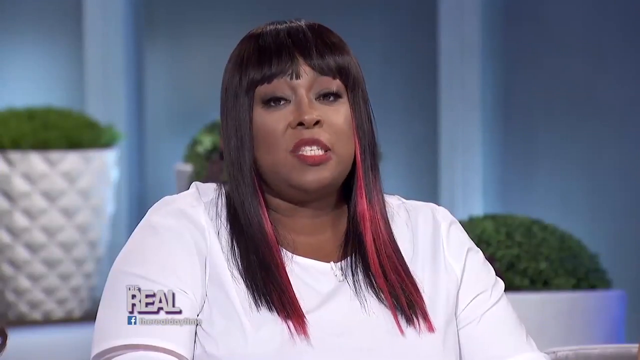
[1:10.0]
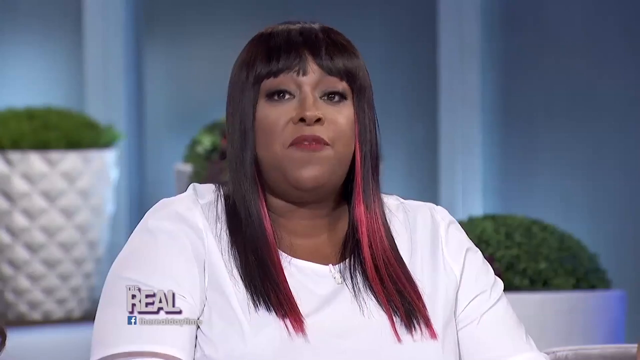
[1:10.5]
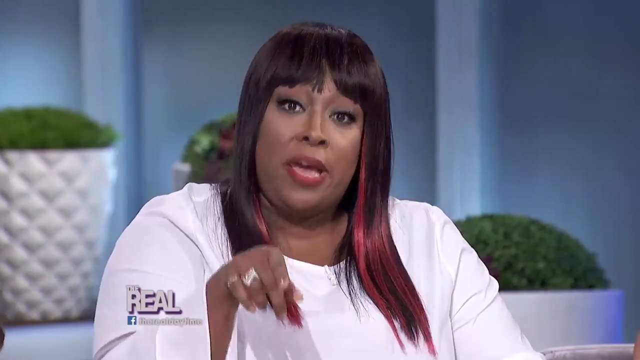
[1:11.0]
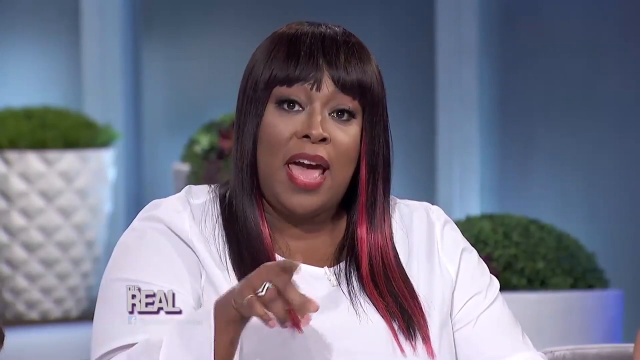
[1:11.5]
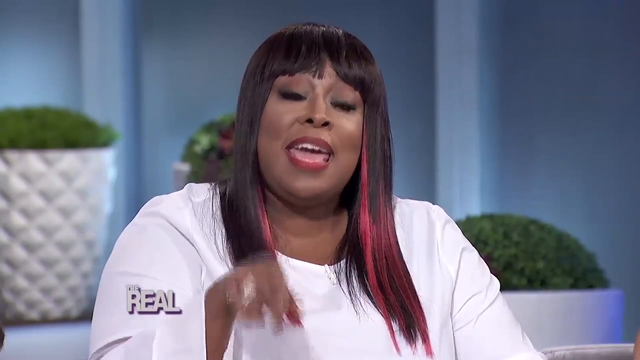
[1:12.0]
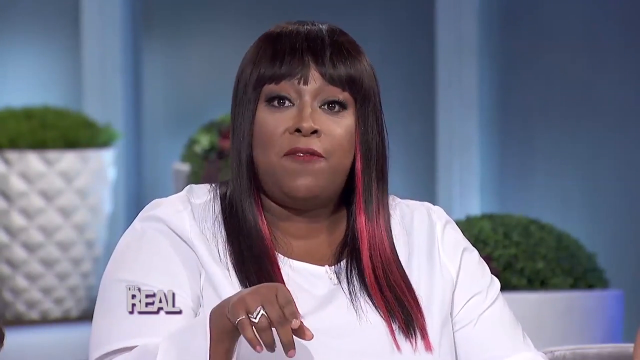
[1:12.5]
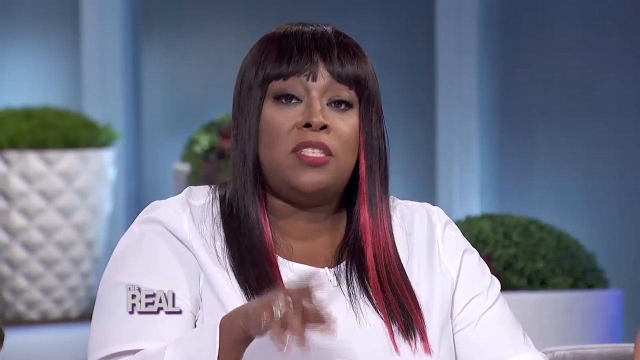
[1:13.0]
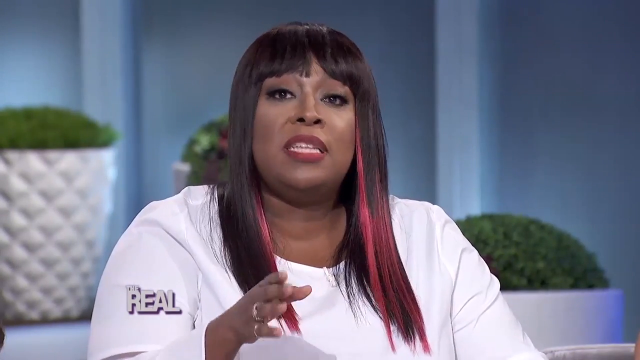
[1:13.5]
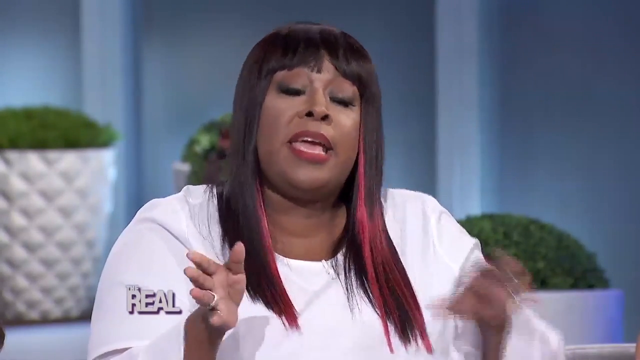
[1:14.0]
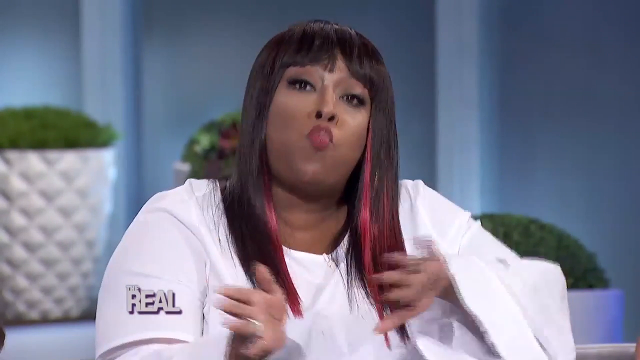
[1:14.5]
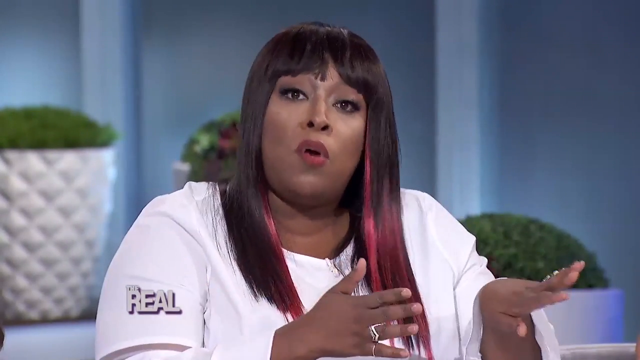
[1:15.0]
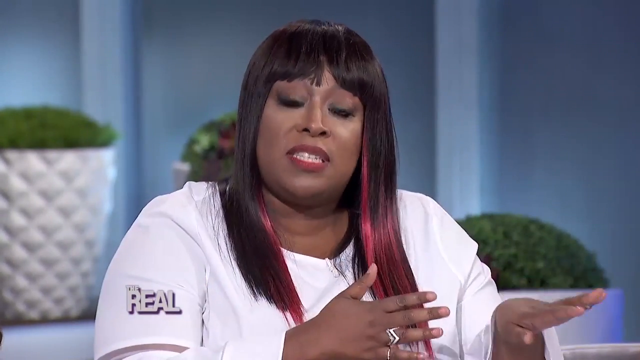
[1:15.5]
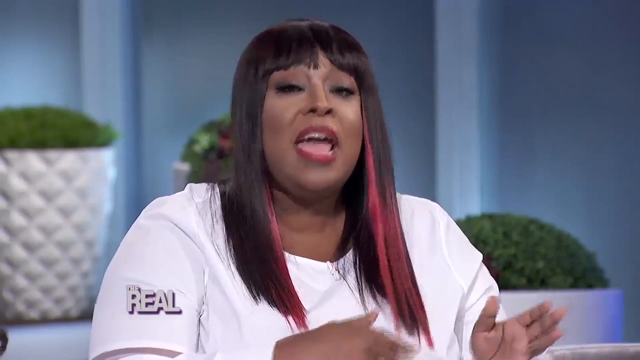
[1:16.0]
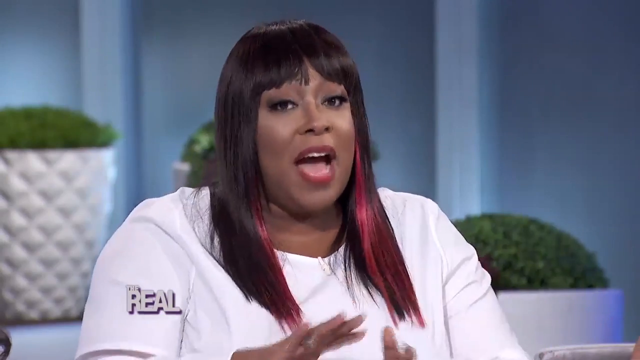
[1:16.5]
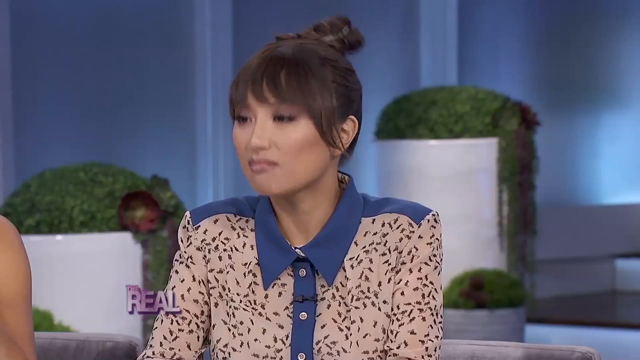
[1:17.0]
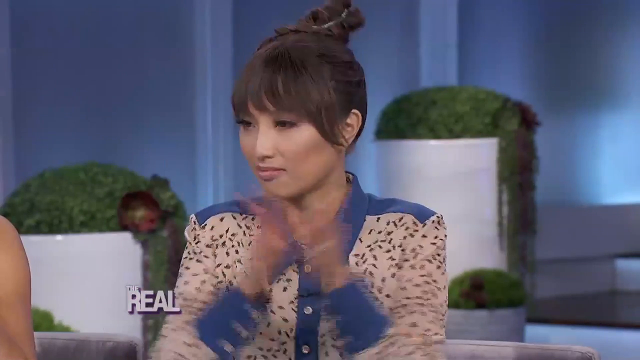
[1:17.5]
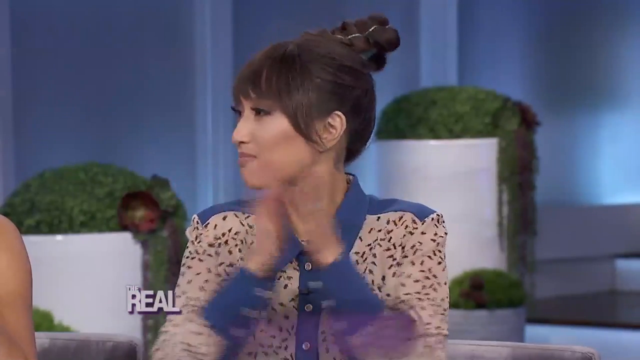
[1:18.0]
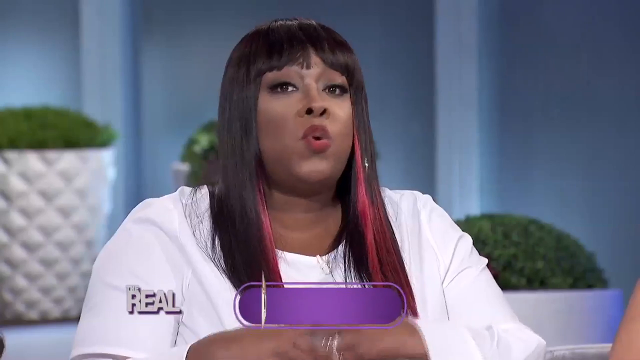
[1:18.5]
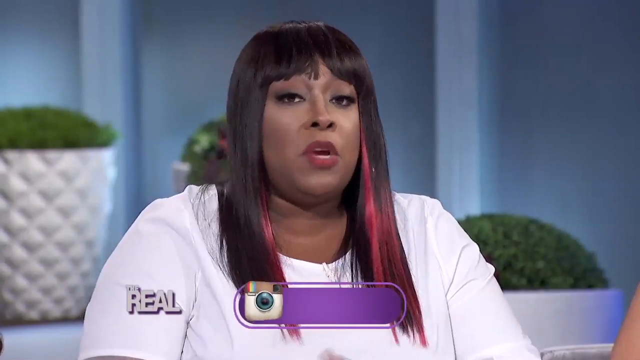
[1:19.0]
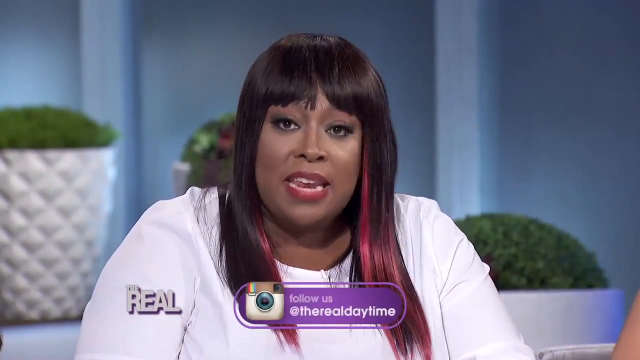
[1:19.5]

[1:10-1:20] A close-up shows the woman with straight black hair and pink highlights speaking directly to the camera. She points toward the camera with her right index finger, then kind of moves her hand a few times as she speaks and kind of uses all of her fingers to point at the camera. With her left hand she kind of swipes across the screen as if saying "move over to the side". The camera shows the woman with the bun and bangs, who claps in agreement. It goes back to the woman with the long, straight black hair and pink highlights, who talks directly to the camera with a very serious expression. She doesn't seem to speak with as much animated expression as the woman with the brown wavy hair.